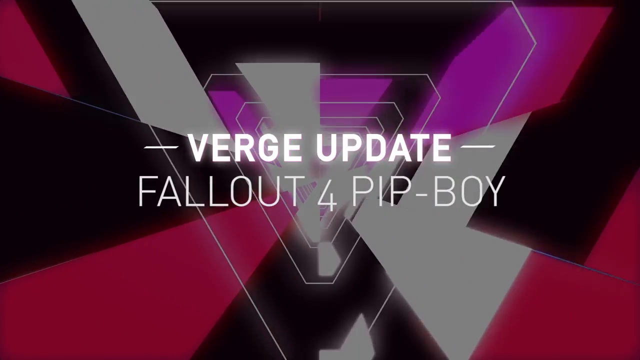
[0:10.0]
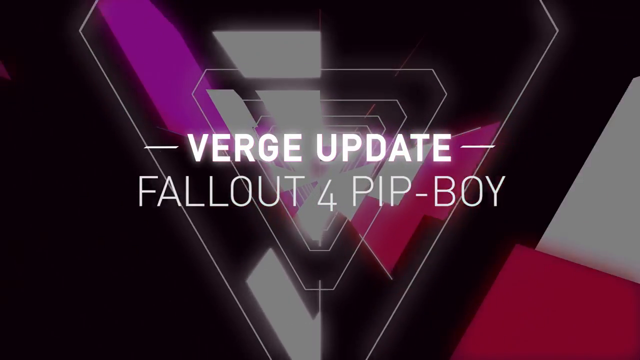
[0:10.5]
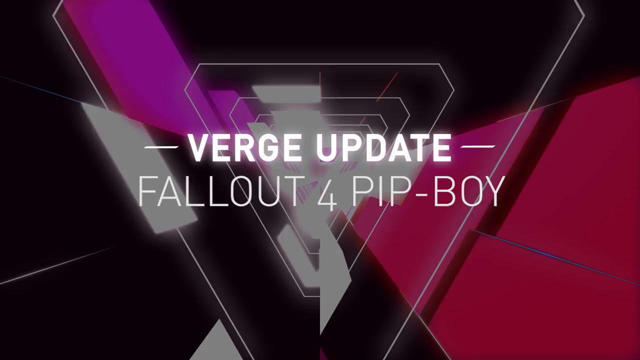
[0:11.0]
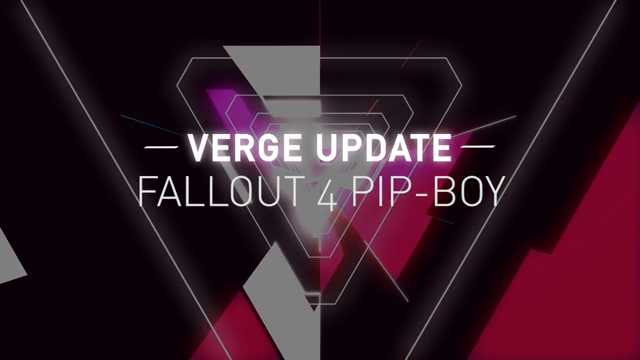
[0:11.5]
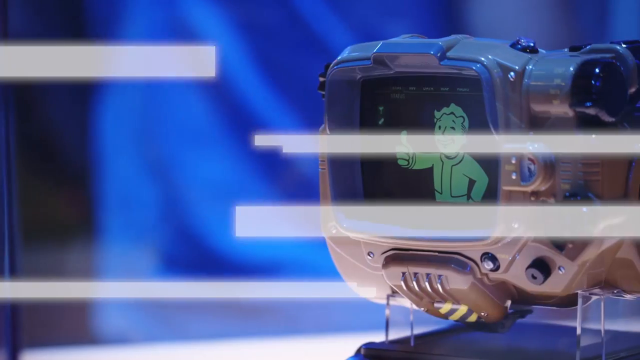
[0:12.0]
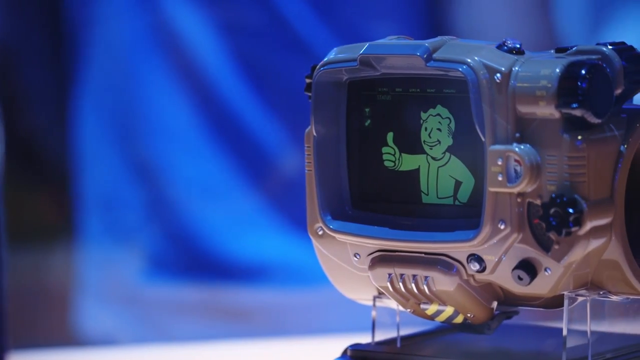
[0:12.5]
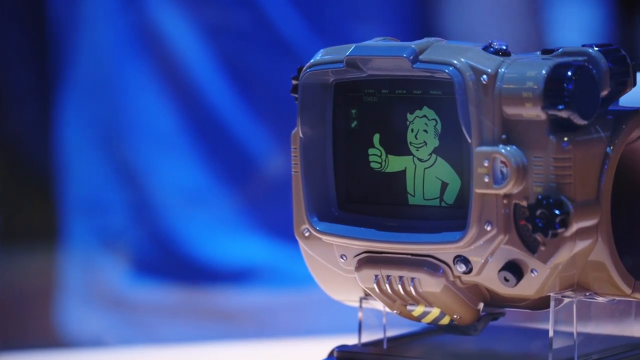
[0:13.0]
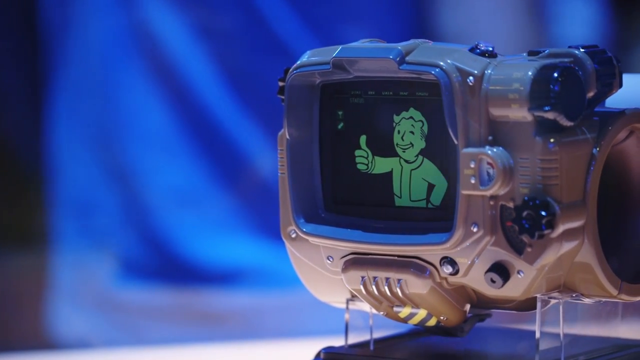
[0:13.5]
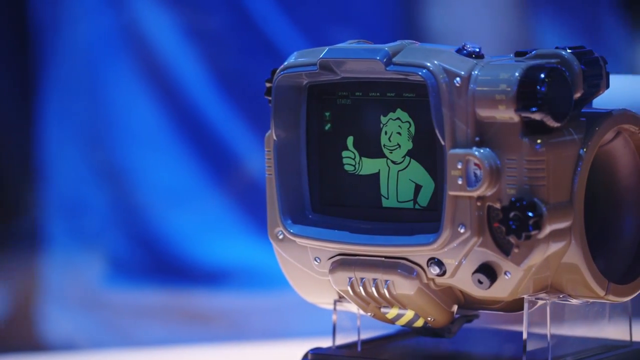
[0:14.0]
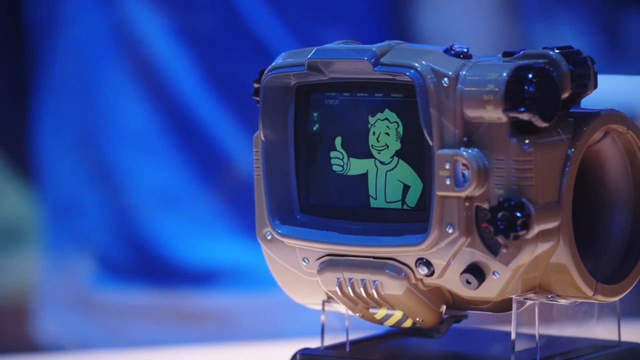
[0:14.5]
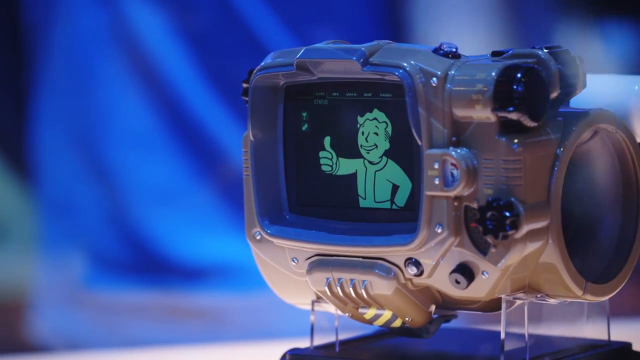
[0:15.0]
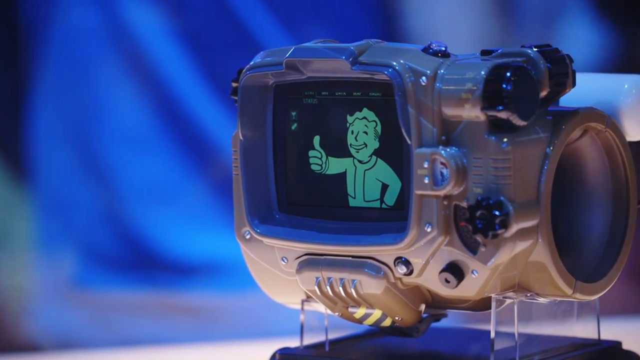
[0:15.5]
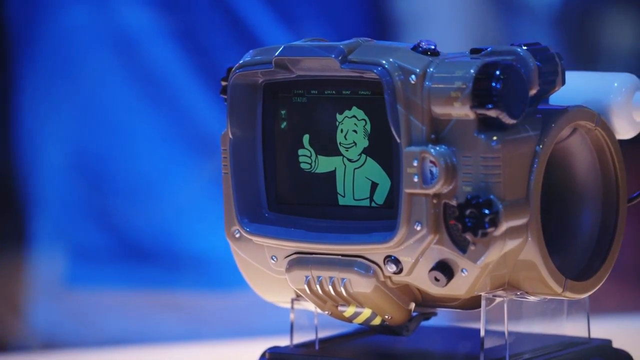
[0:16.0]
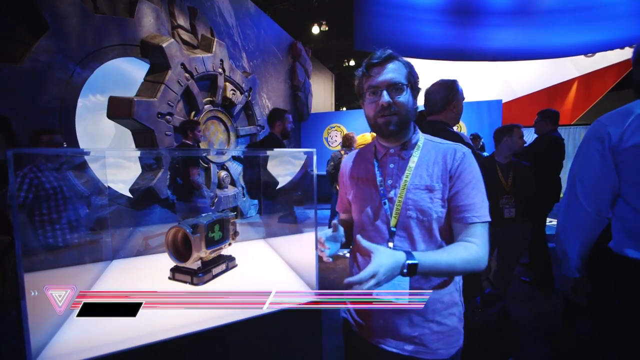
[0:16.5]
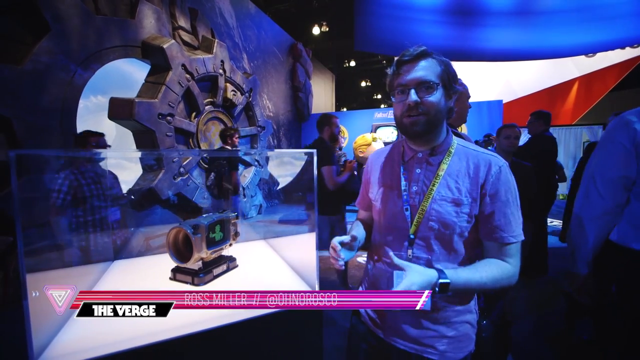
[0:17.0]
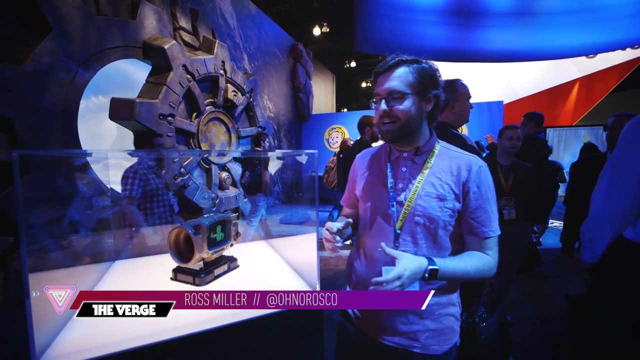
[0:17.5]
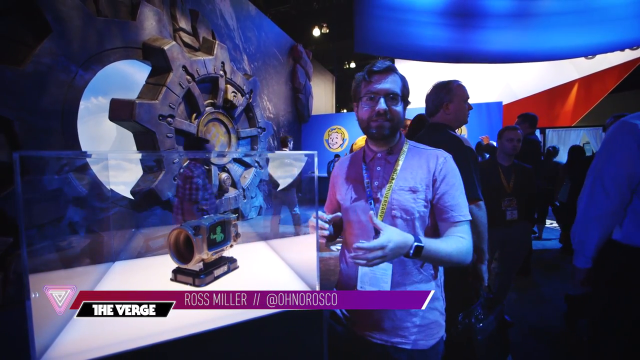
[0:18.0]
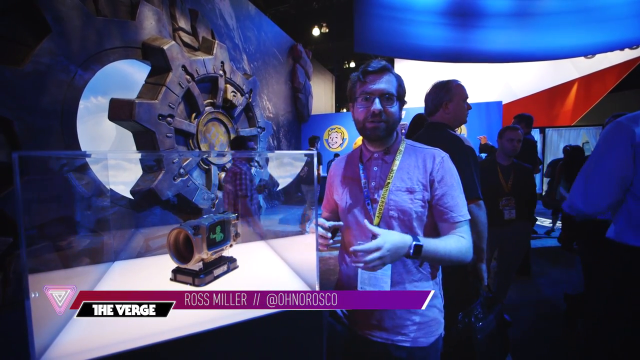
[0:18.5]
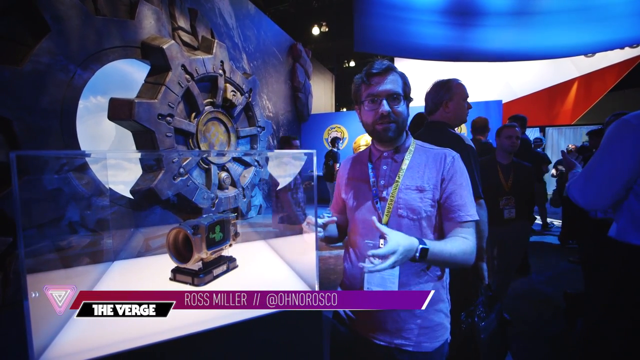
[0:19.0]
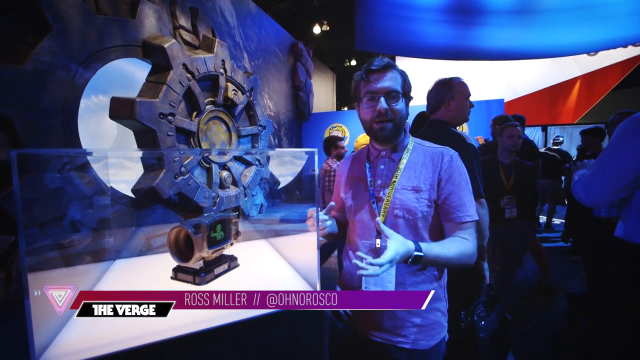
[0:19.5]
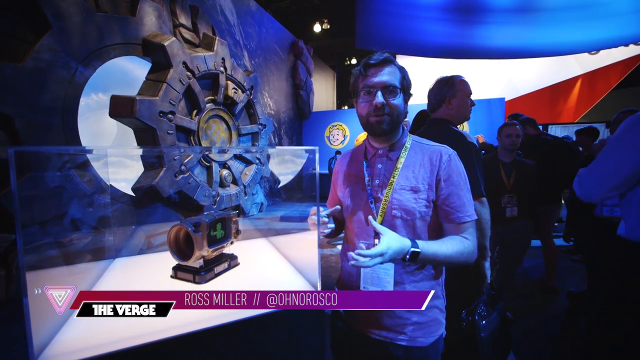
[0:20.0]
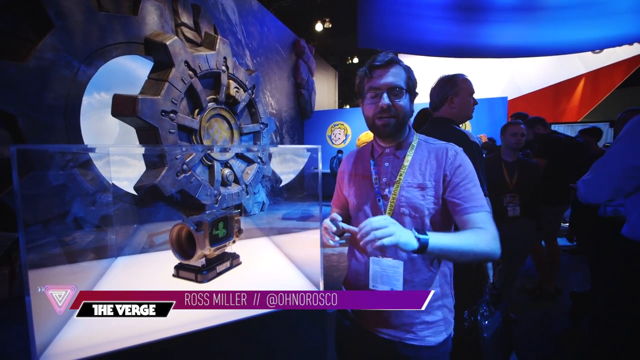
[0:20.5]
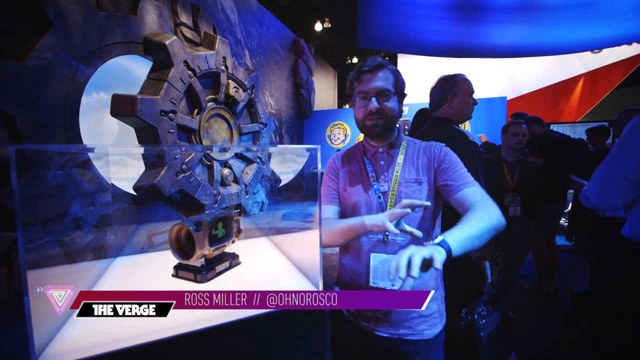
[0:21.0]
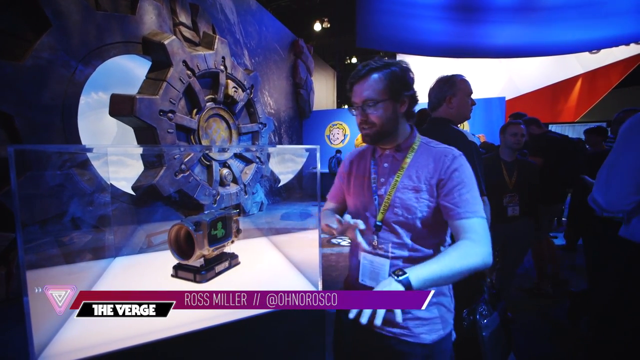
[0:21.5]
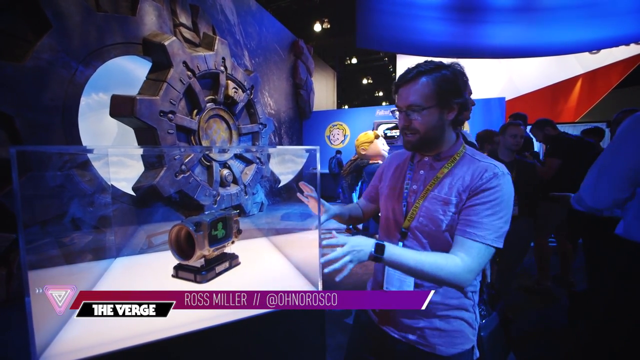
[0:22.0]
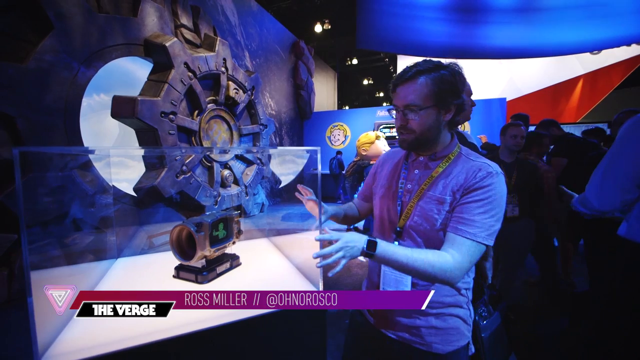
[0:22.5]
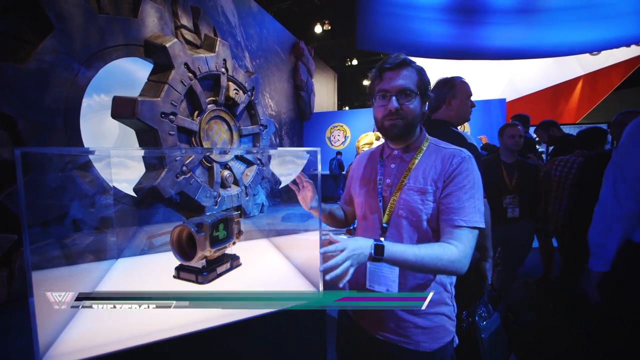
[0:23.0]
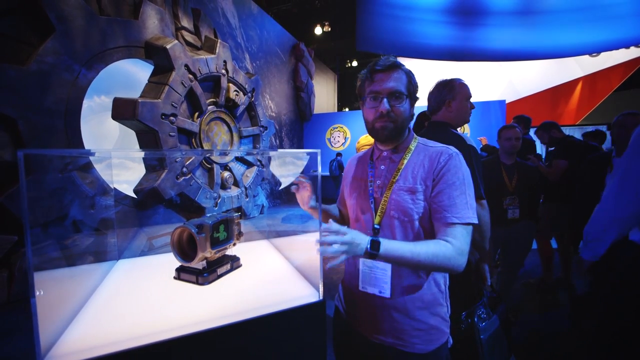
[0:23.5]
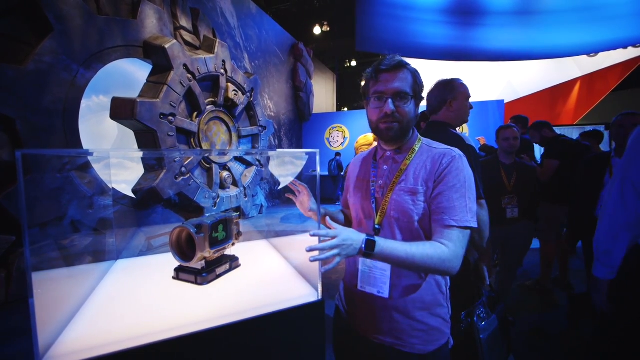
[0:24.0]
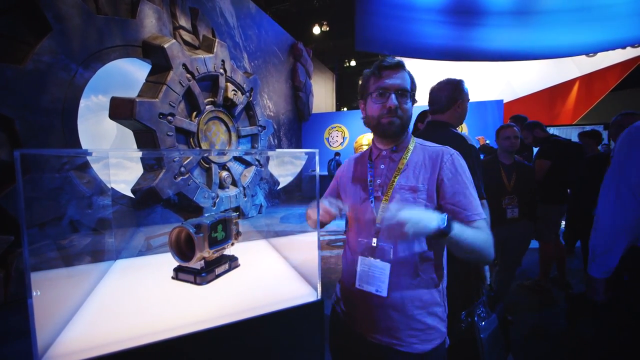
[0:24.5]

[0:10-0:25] "Verge update Fallout for Pip-Boy" appears. On a screen, a green character holds a thumbs-up sign. A man wearing glasses and a yellow and blue lanyard motions to the glass case as he talks to the camera. There is a gold-colored device inside a clear box. "The Verge" appears, and Ross Miller wears a short-sleeve shirt and a black watch. The man in the black watch wears a lanyard, glasses, and a pink shirt buttoned all the way up with three buttons, and he motions to the clear box. A character is on a screen. Behind the speaker is a white, red and blue wall, and there are many people there, with five people visible behind the man talking. A gray camera shows the green character holding a thumbs up. People walk behind the man as he speaks to the camera with glasses on and a lanyard around his neck. There is a stencil on the wall.